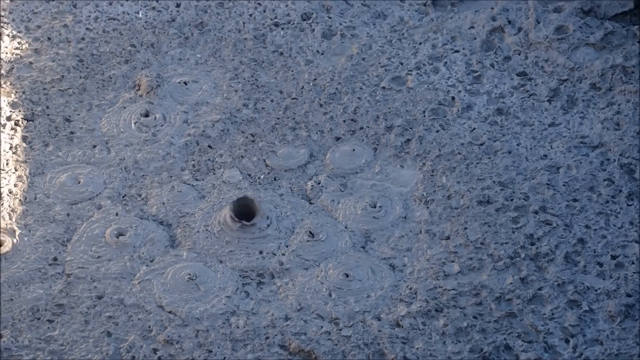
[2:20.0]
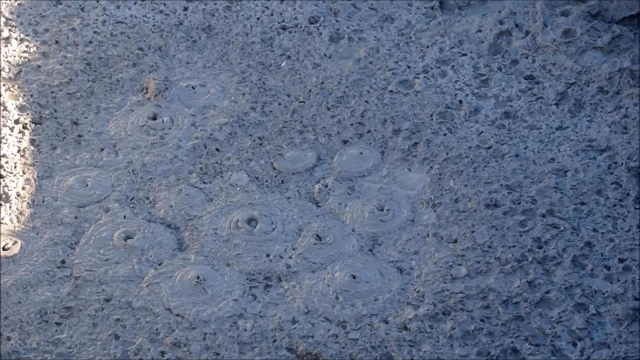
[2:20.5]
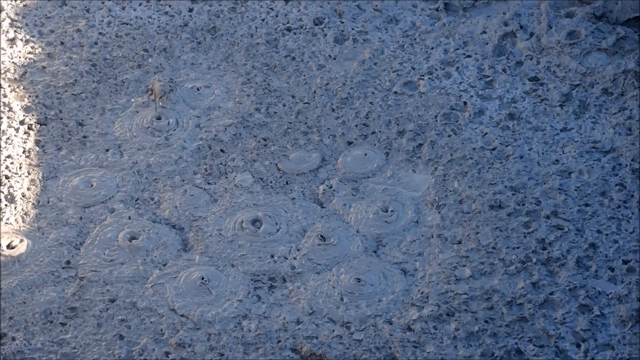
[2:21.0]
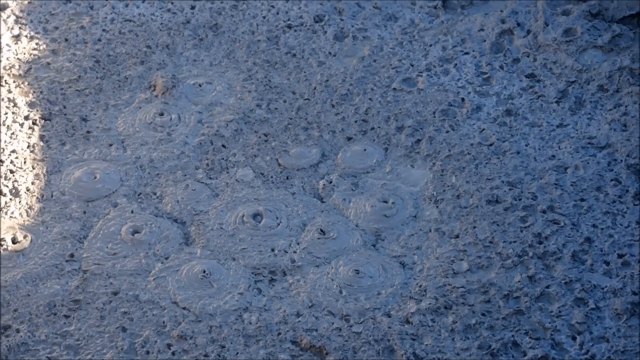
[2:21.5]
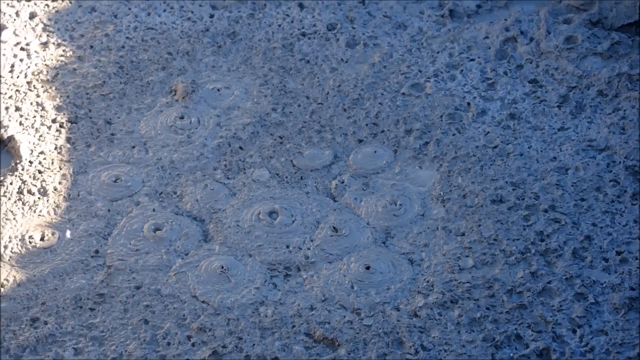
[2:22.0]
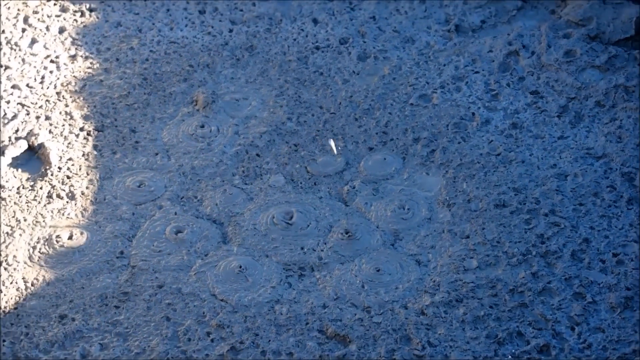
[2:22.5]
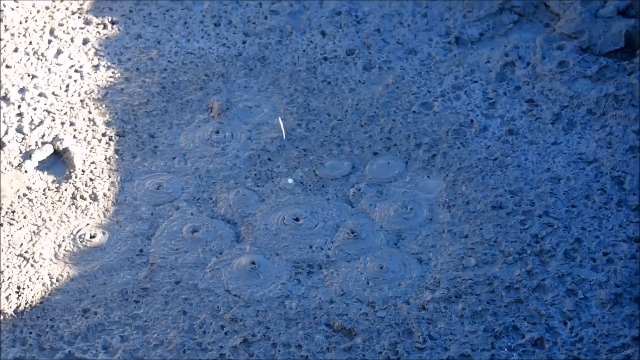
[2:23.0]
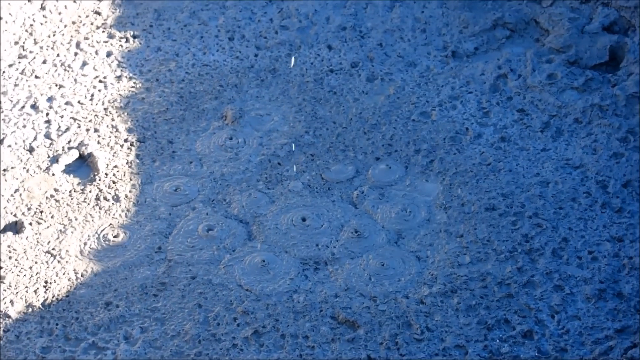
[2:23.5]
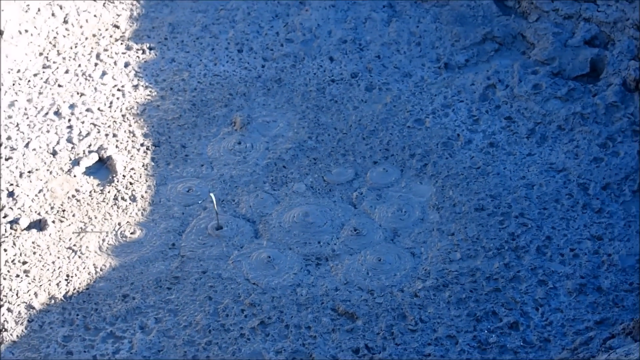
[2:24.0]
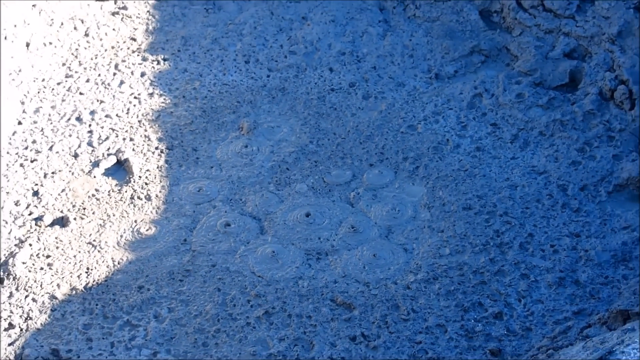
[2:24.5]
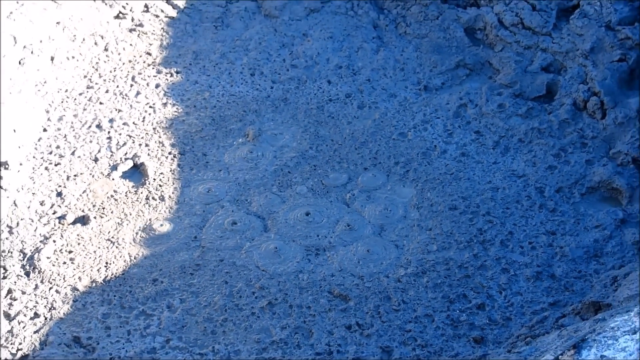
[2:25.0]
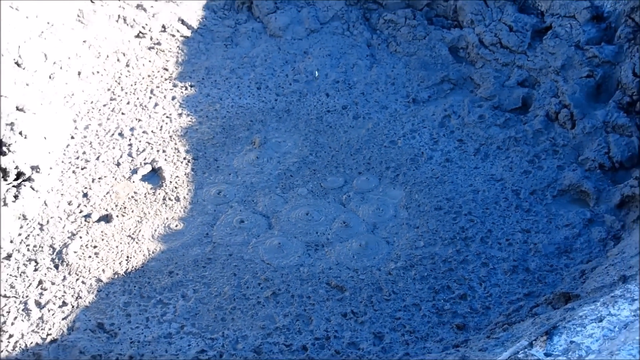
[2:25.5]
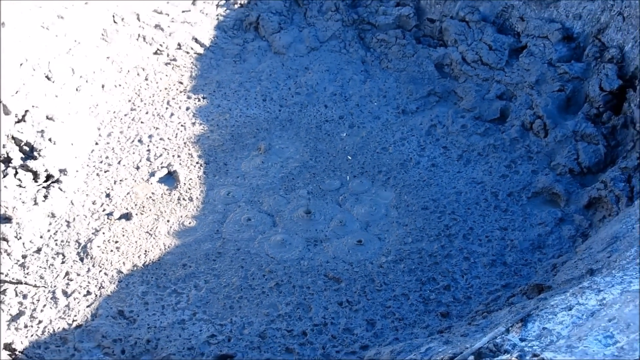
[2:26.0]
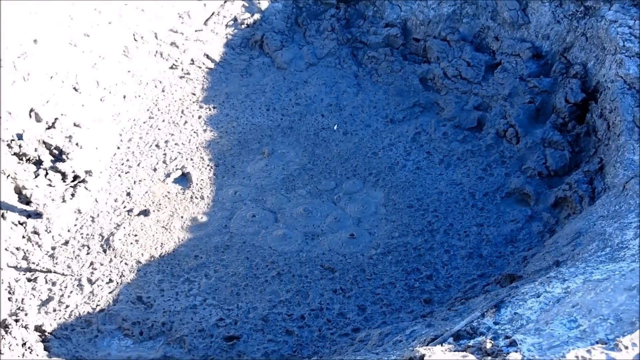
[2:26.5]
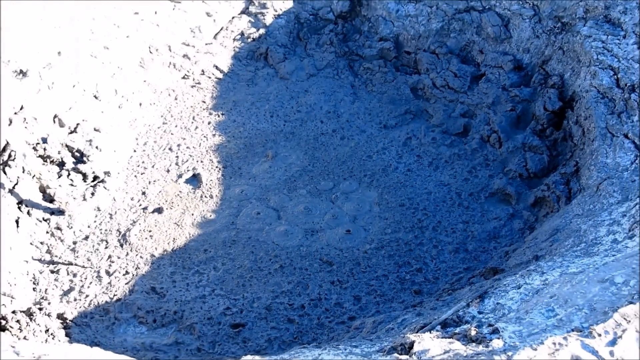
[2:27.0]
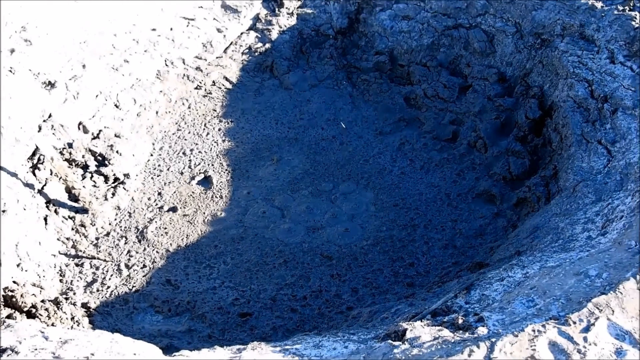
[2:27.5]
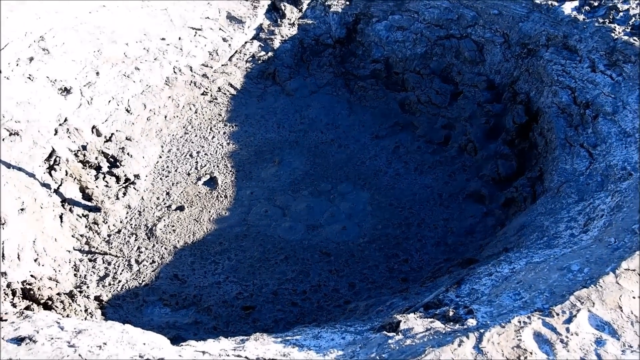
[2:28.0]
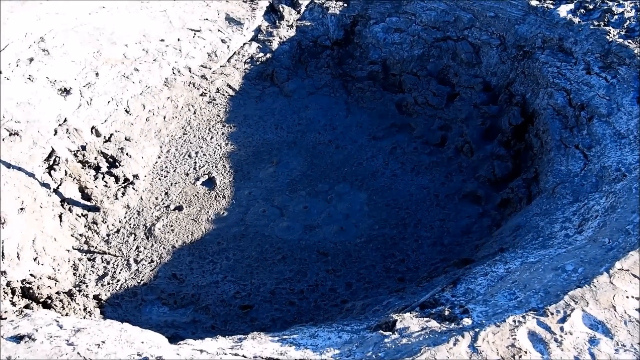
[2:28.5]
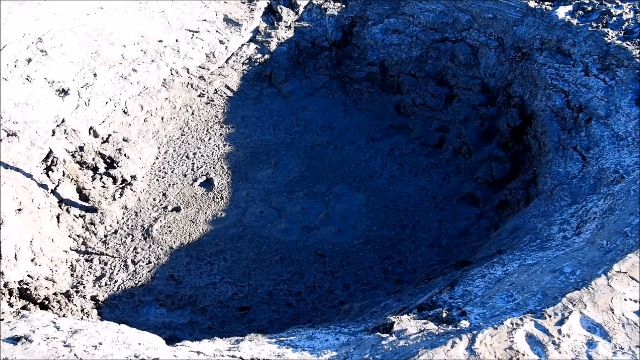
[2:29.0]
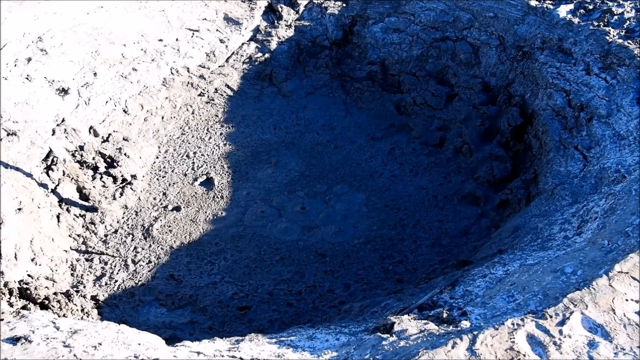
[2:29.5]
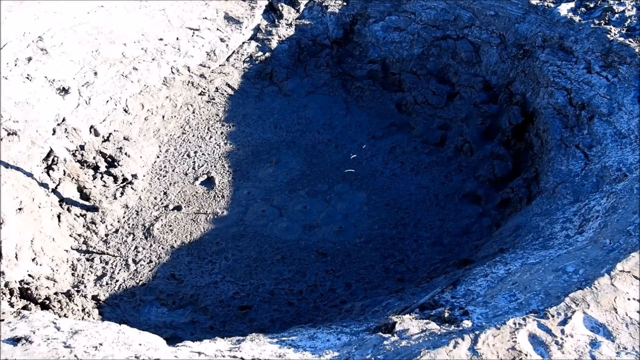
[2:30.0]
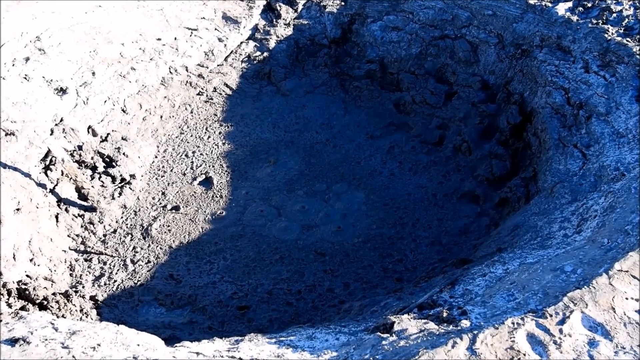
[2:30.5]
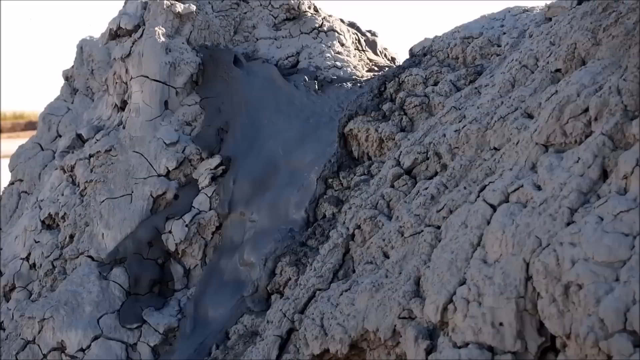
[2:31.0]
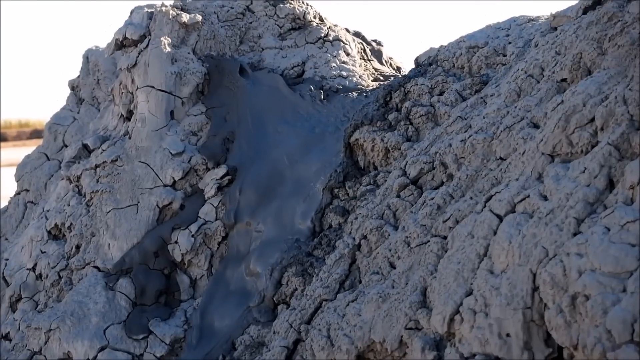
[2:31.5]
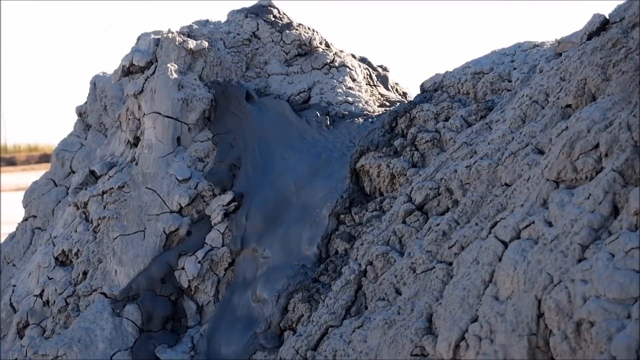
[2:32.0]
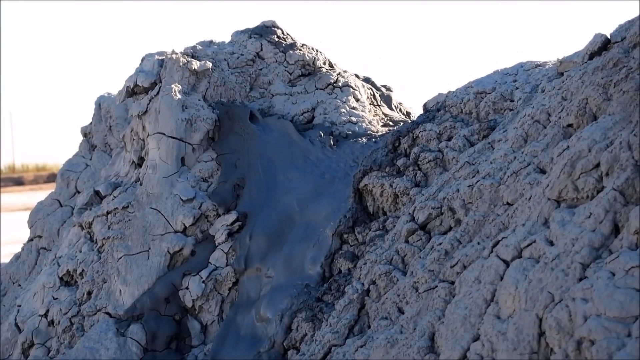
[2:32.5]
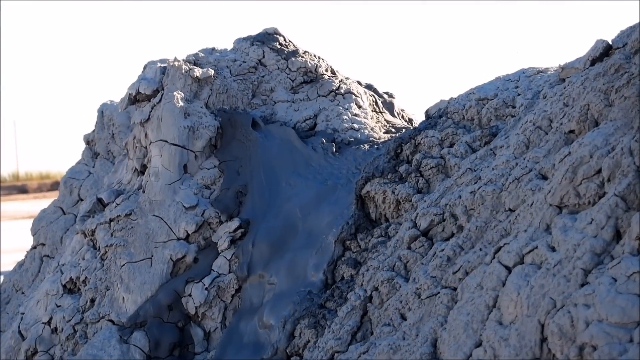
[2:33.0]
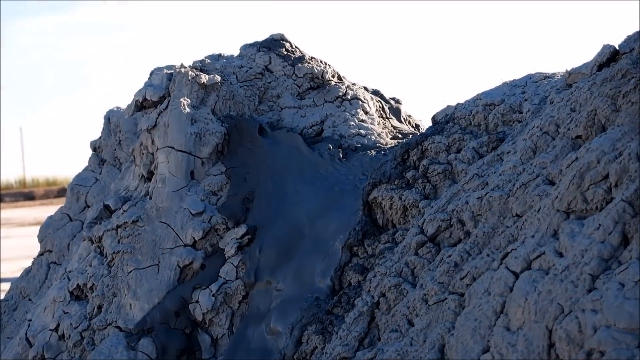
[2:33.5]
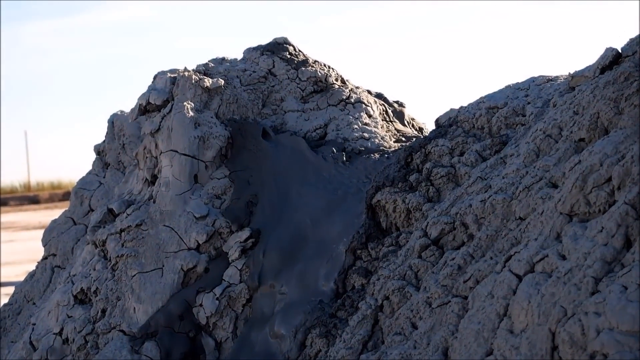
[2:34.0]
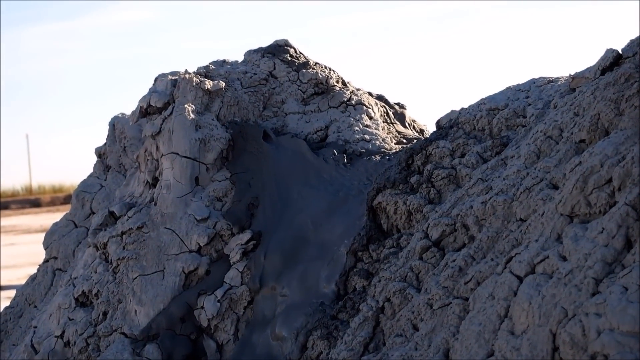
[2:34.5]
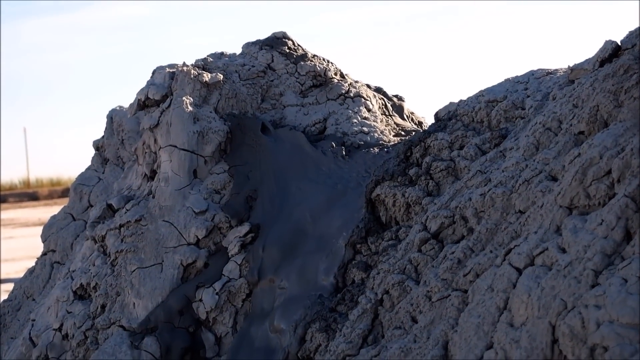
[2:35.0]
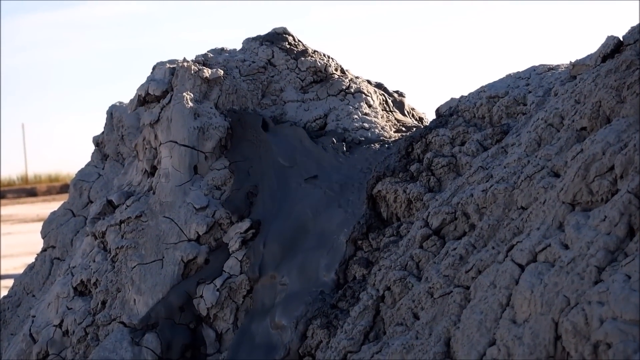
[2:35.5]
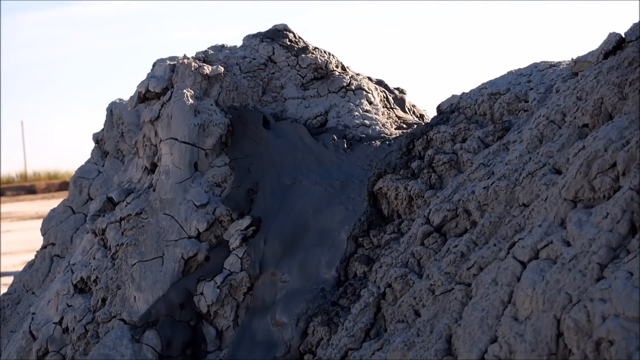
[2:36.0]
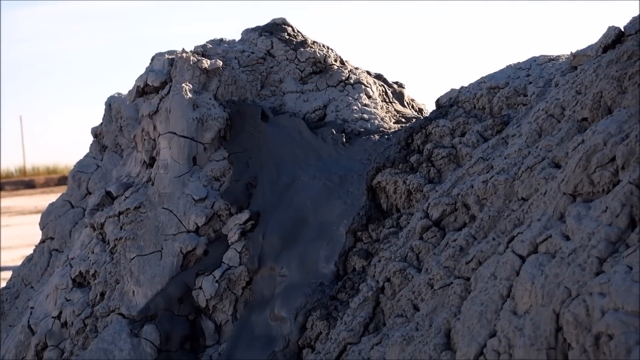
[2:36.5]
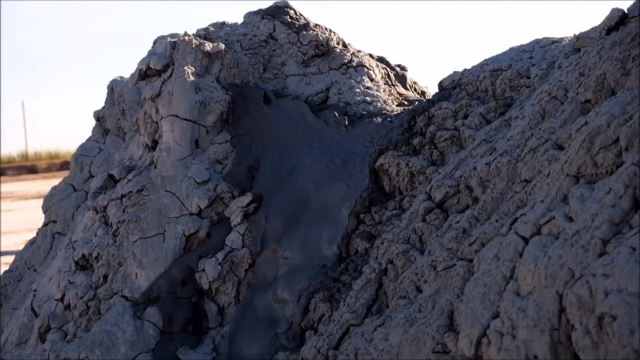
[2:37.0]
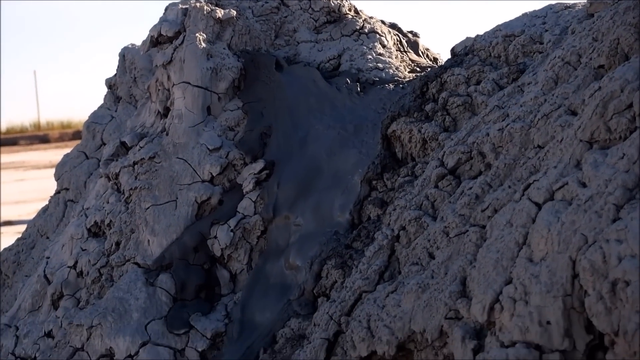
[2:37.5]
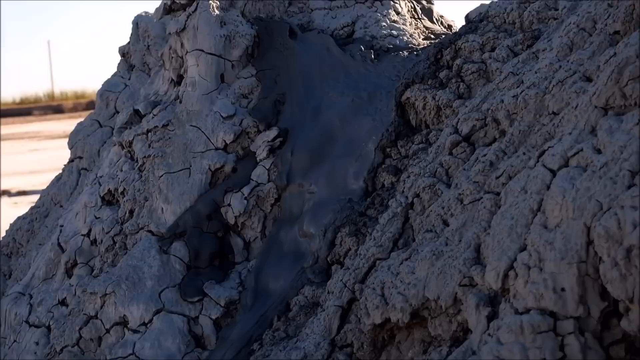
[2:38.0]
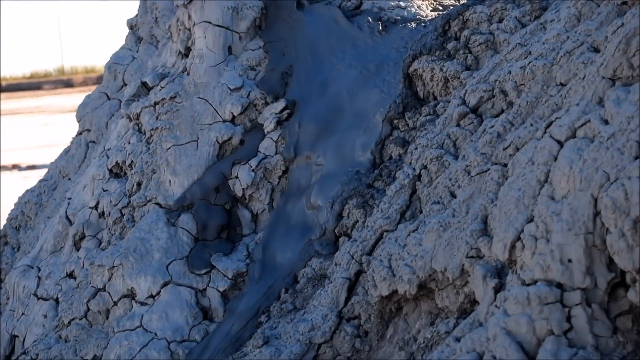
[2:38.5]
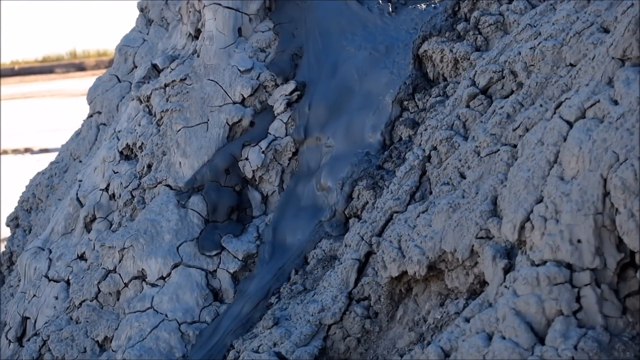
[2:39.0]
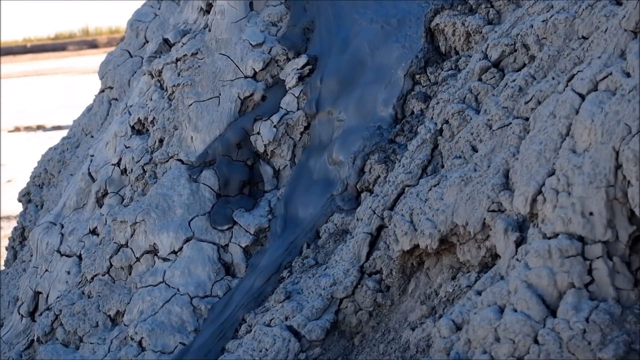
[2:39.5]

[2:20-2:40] The mud and clay hot spring is shown, with circles of mud and clay that have a hole in the middle; they bubble, and the hole spits a bit of the substance into the air. As the camera zooms out, even the areas without circles seem similar in colour, mostly gray and brown. When the camera completely zooms out, the scene looks almost like a blue filter as the shadows completely cover it. Next, someone films from the bottom up a rocky formation whose wall has clay and mud dripping from it; a hole at the top spits out clay and mud, and the mud drips all the way down the wall of the rock formation.